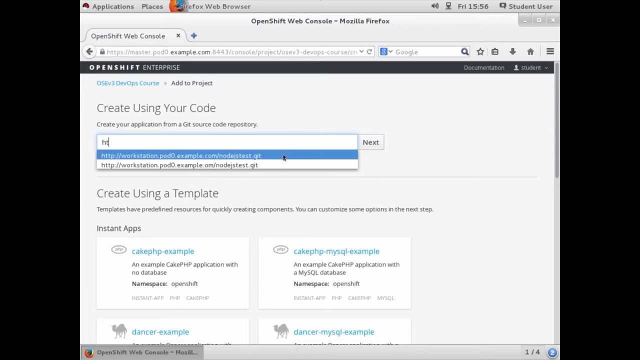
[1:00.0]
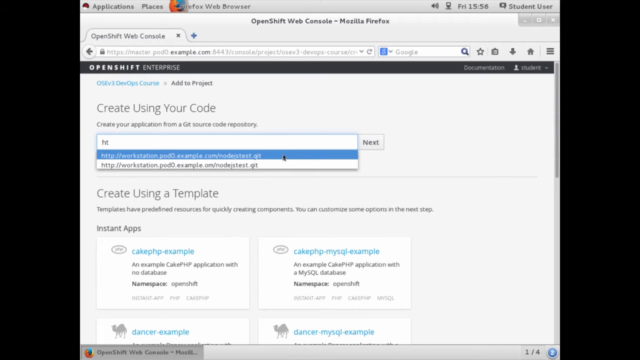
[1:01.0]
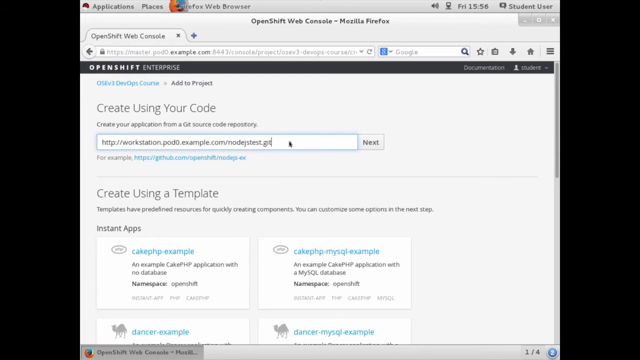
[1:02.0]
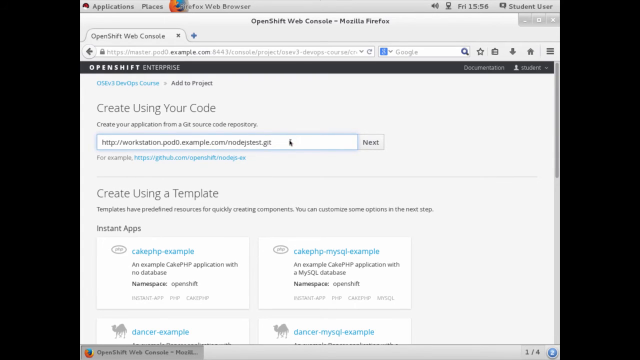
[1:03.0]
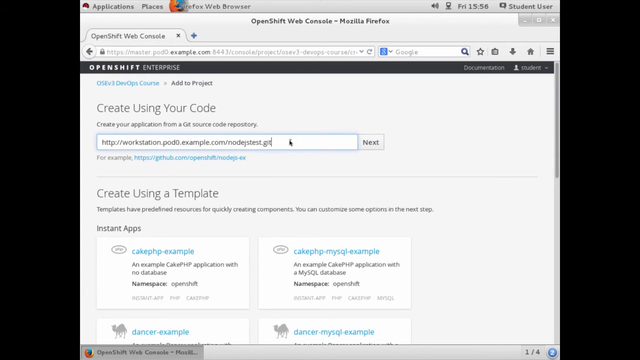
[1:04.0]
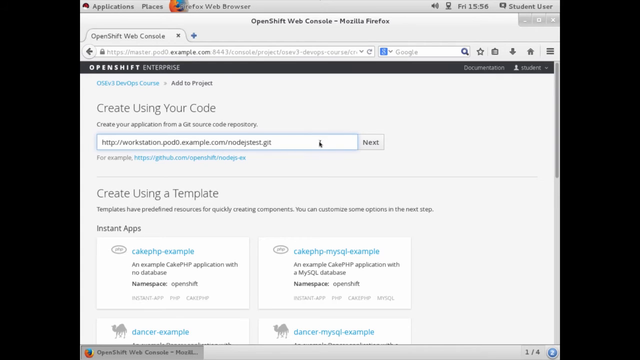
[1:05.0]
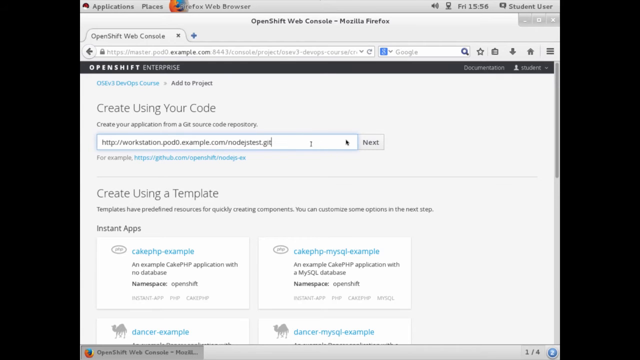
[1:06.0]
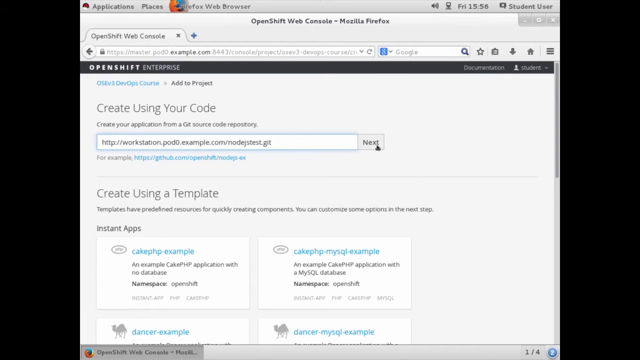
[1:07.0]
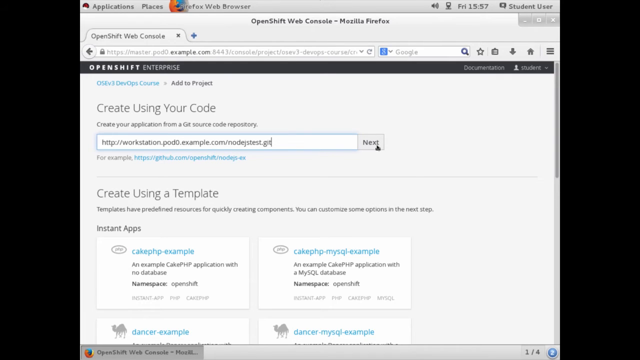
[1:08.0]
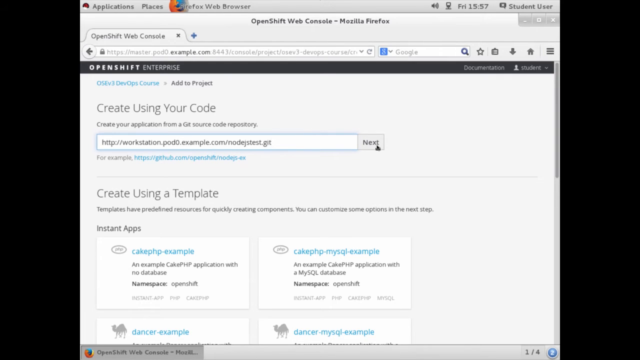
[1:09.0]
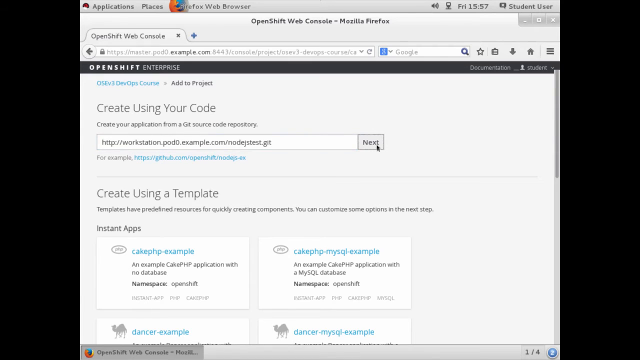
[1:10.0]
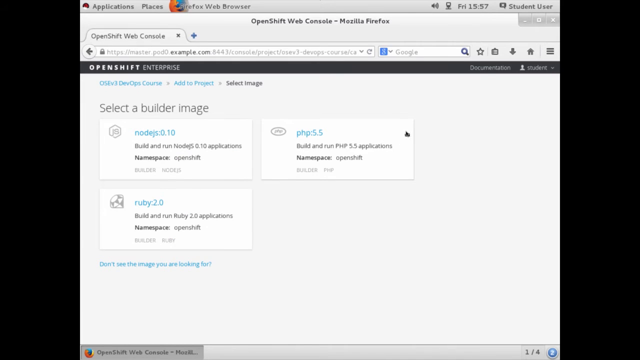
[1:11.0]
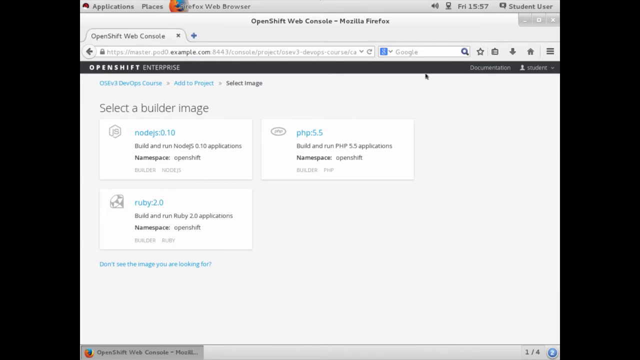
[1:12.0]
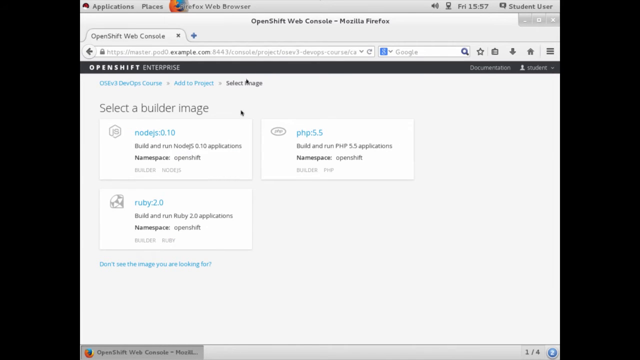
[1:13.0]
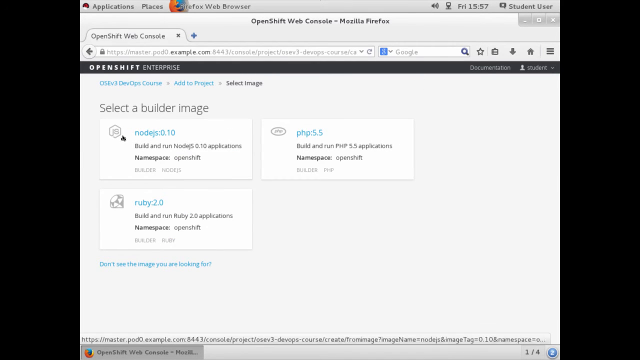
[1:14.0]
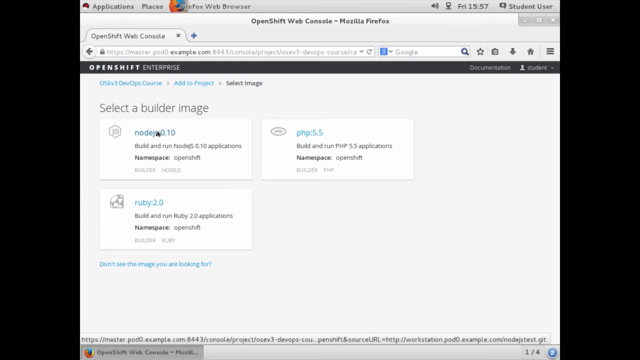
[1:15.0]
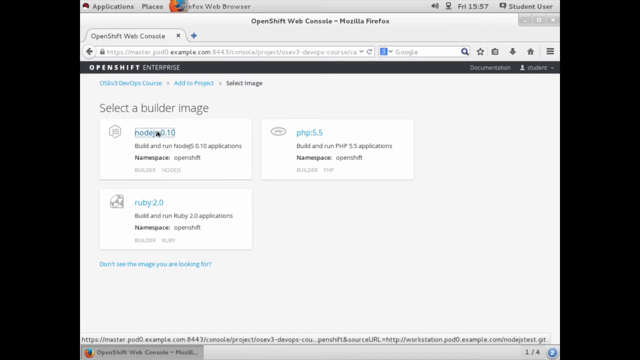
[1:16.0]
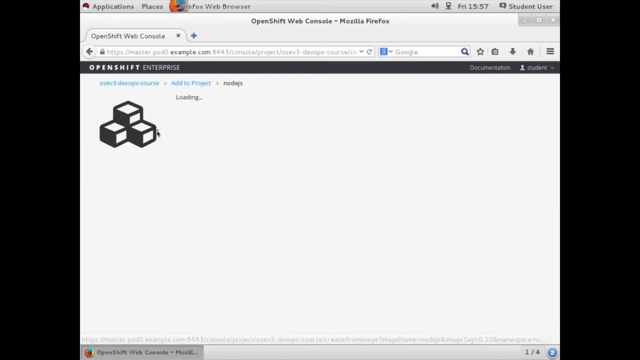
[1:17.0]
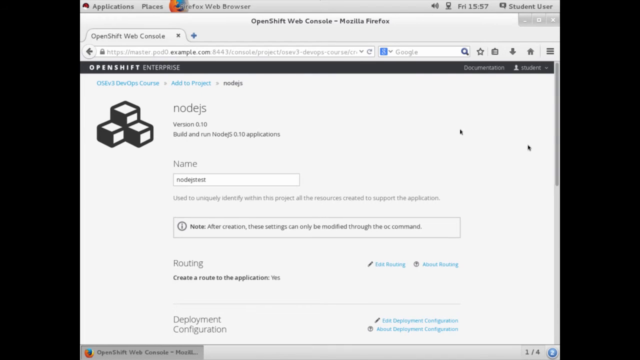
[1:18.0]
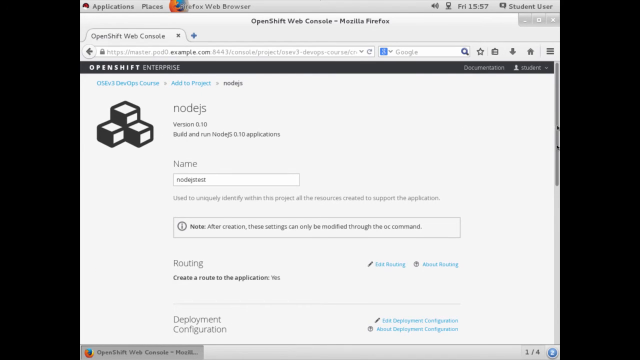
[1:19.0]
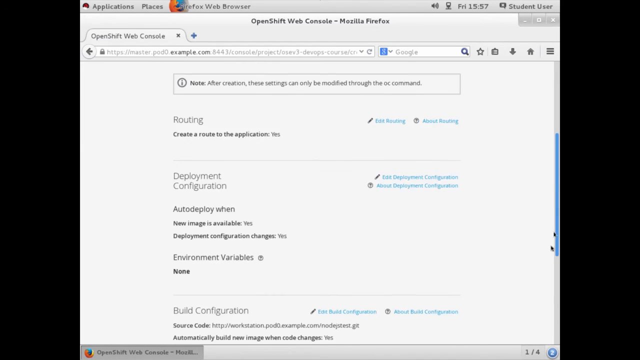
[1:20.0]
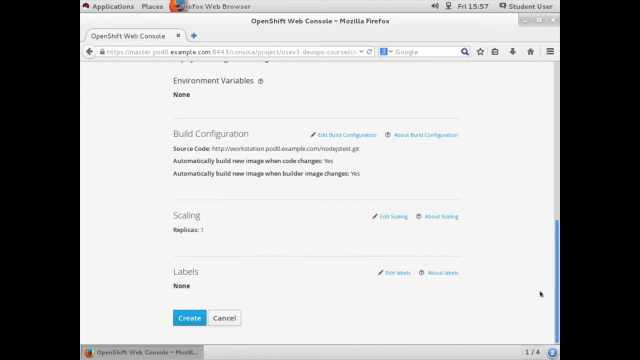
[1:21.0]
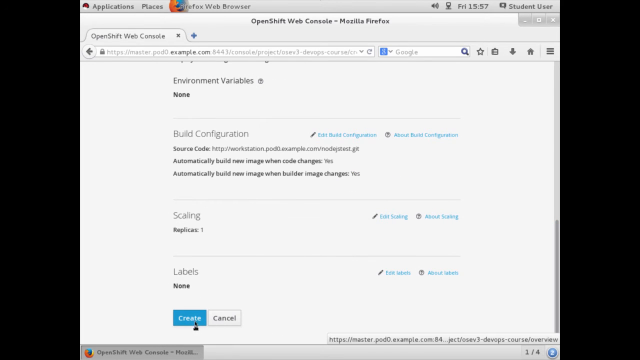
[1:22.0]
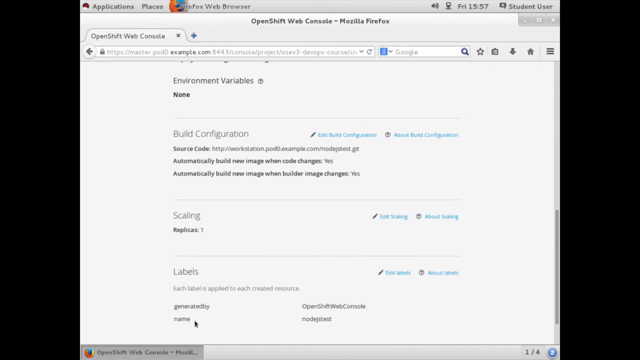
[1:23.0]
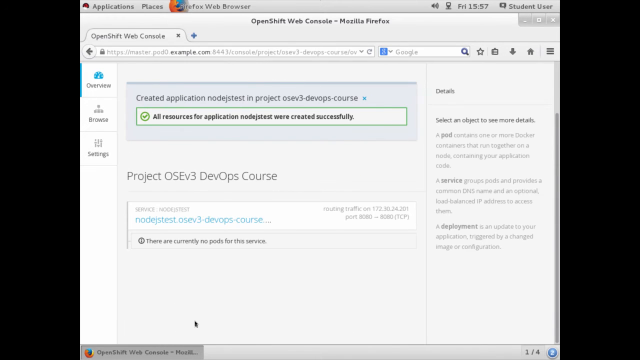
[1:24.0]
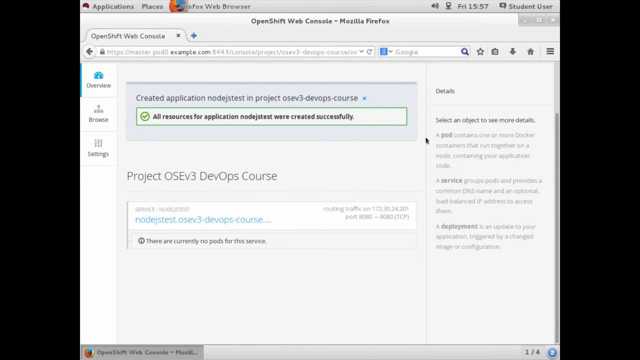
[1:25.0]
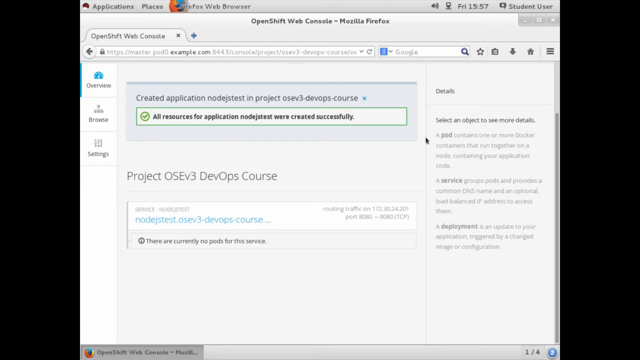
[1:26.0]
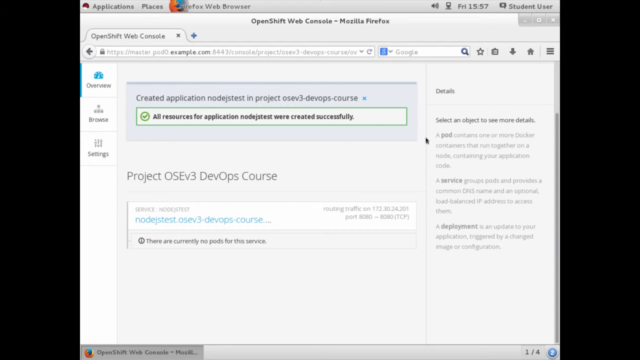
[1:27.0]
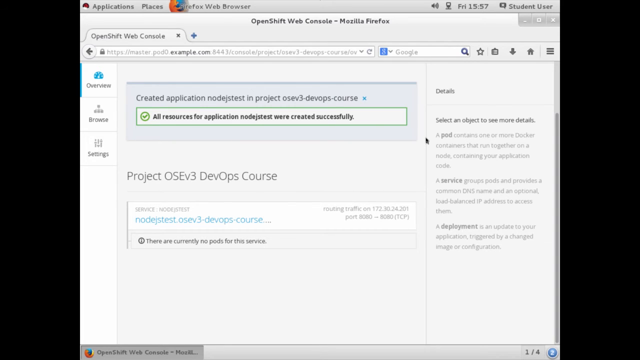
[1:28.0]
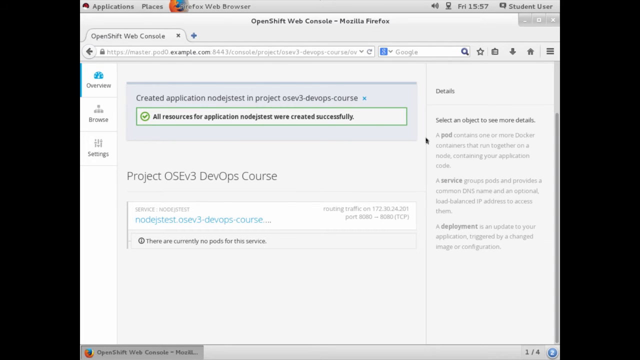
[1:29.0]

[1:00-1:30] The screen recording continues in the Firefox web browser, on a web page with various templates; the tab is labeled "OpenShift web console". The page shows that a new project is being created and reads "create using your code. Create your application from a Git source code repository." The user types a URL, which prompts a box to drop down, and clicks the top option. To the right of the text box is a button reading "Next", which they click. This navigates to a new page labeled "Select a Builder Image" at the top, with three large white buttons reading "Node.js 0.1.0", "PHP 5.5" and "Ruby 2.0". They click the Node.js 0.1.0 button, which opens a new web page, quickly scroll down toward the bottom, and click a button at the bottom that reads "Create".